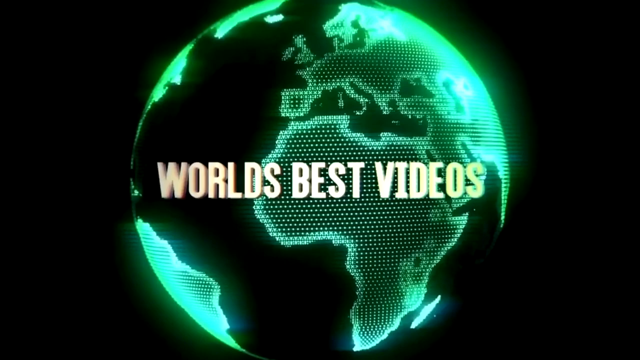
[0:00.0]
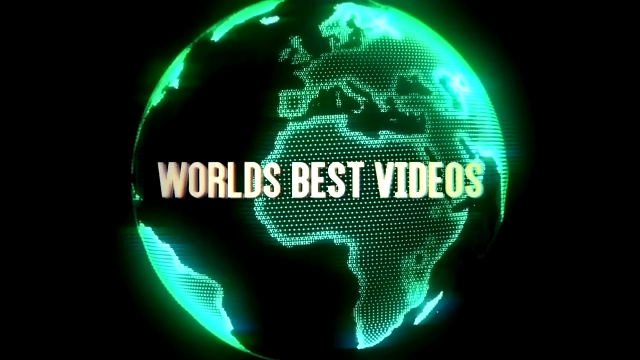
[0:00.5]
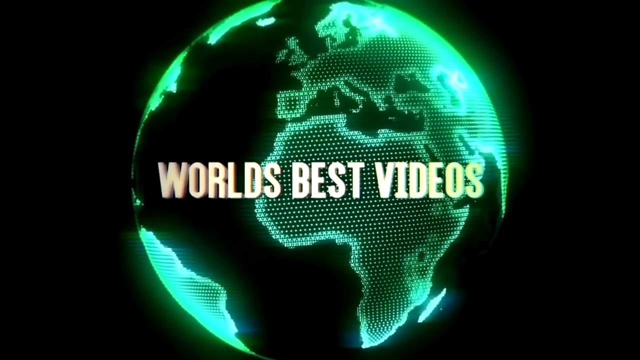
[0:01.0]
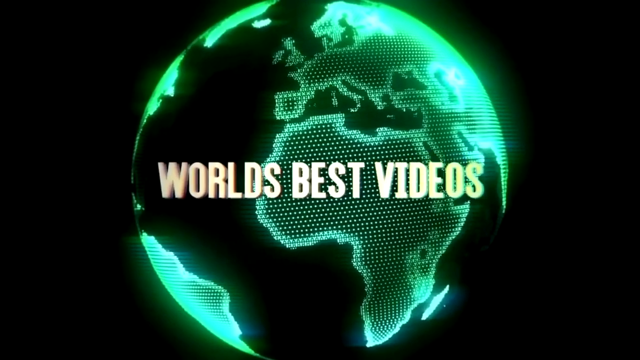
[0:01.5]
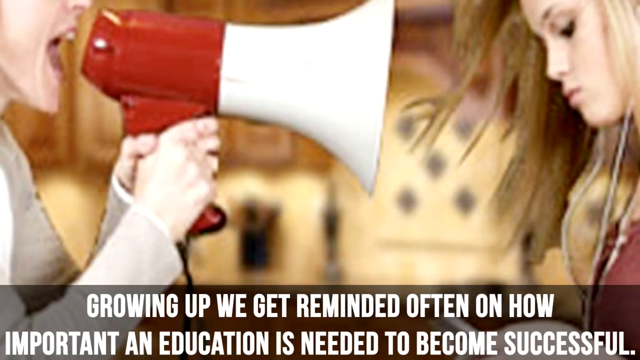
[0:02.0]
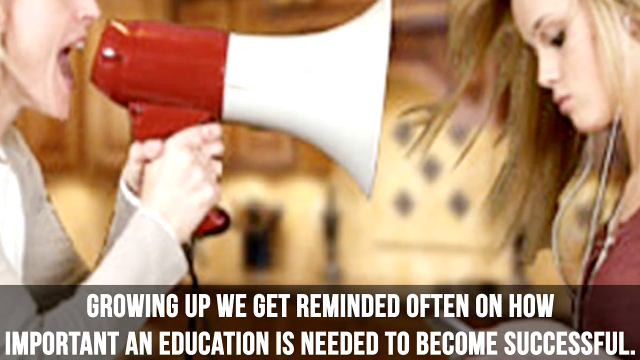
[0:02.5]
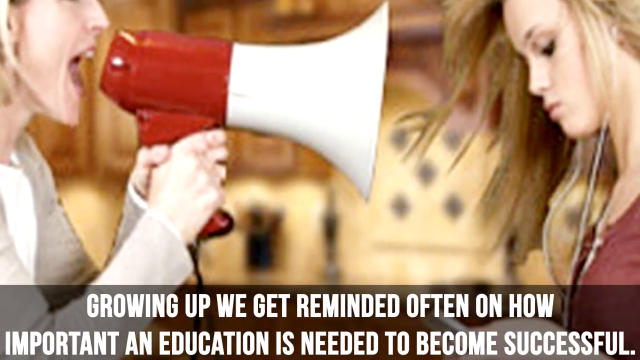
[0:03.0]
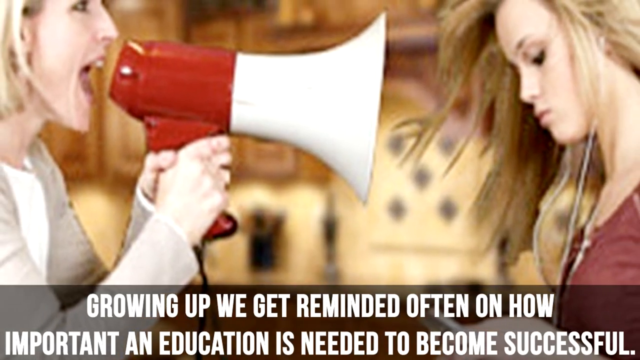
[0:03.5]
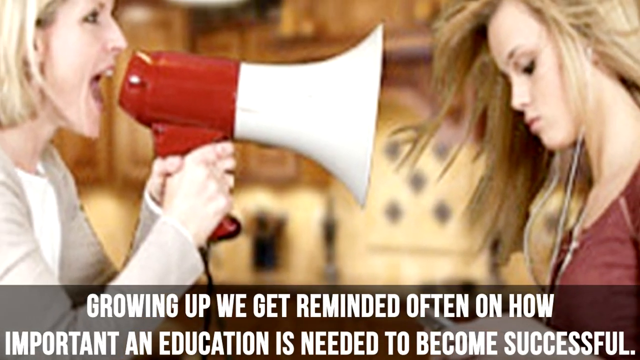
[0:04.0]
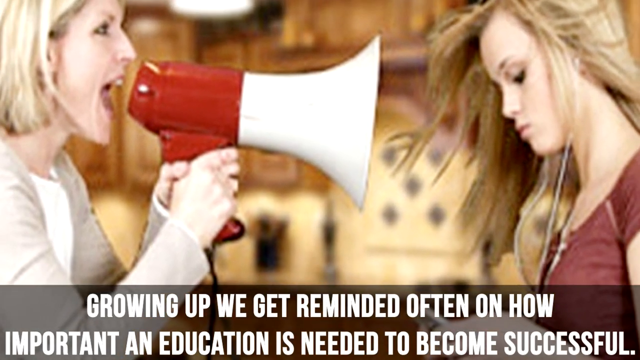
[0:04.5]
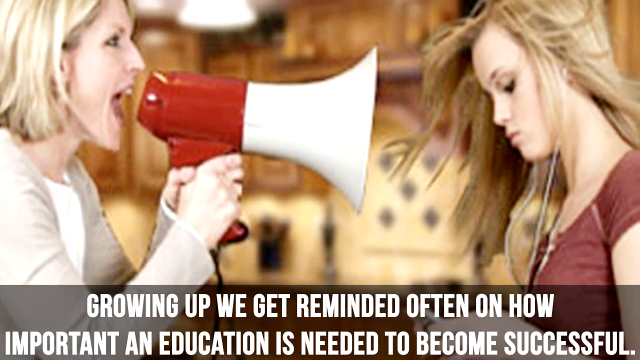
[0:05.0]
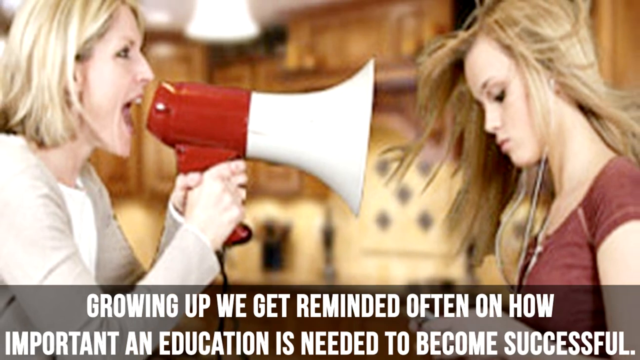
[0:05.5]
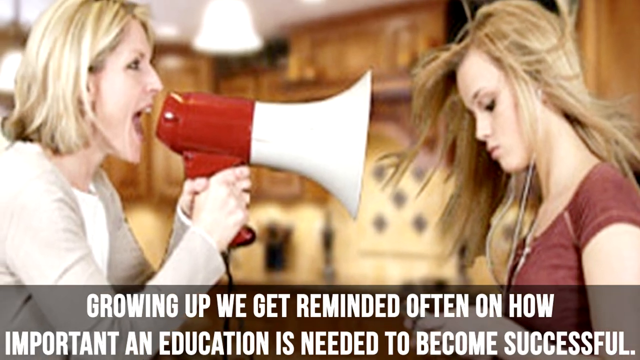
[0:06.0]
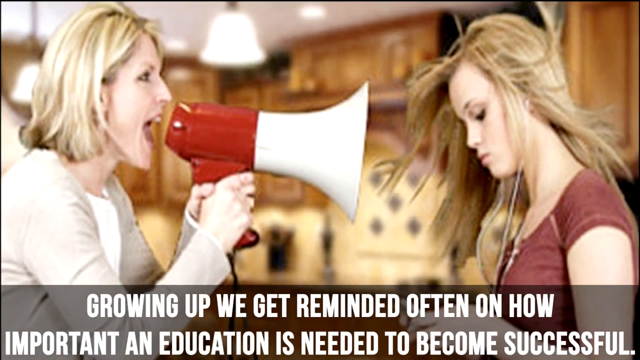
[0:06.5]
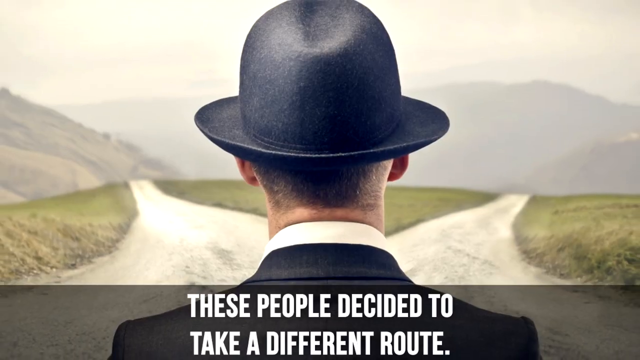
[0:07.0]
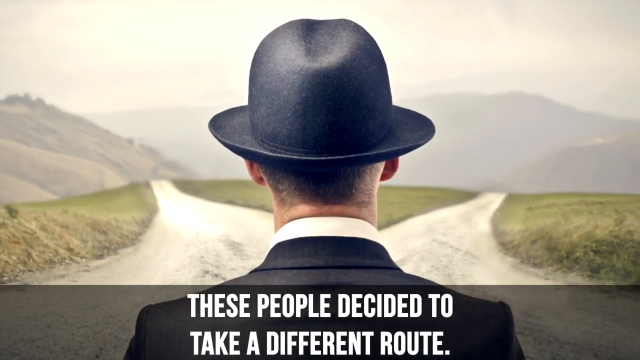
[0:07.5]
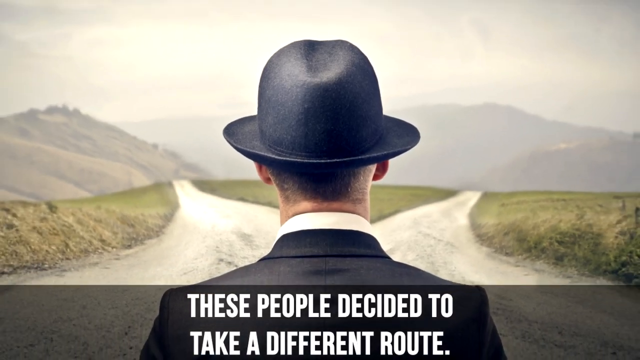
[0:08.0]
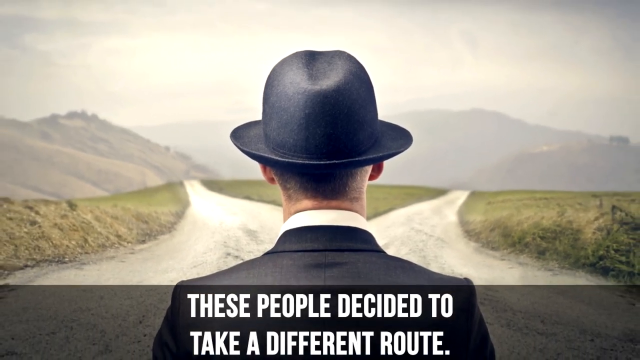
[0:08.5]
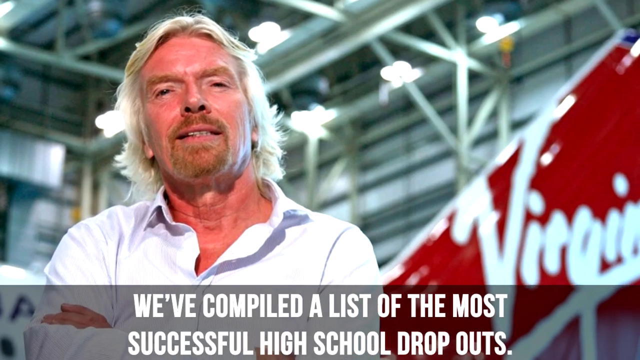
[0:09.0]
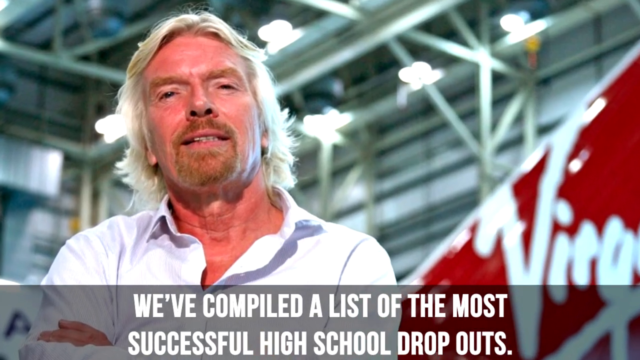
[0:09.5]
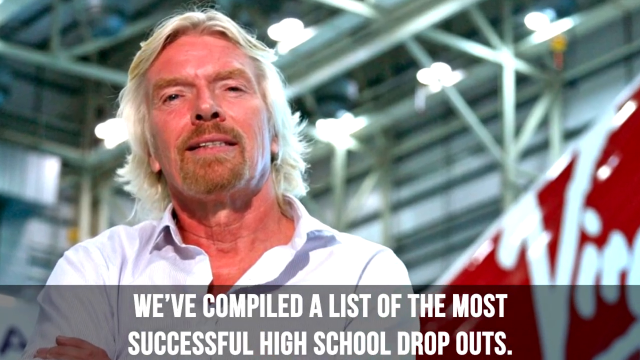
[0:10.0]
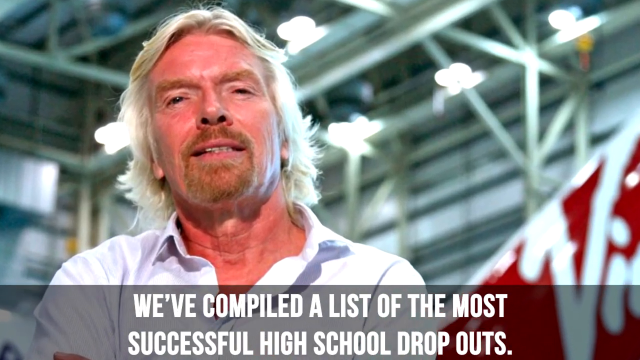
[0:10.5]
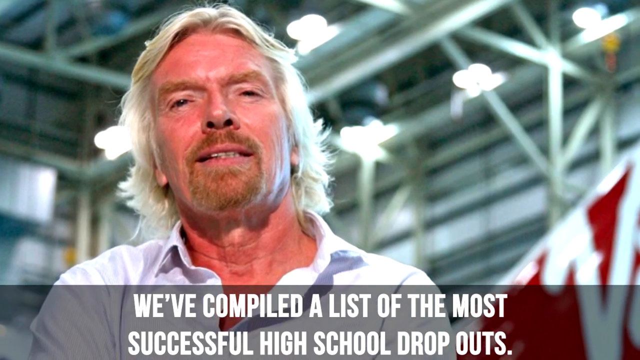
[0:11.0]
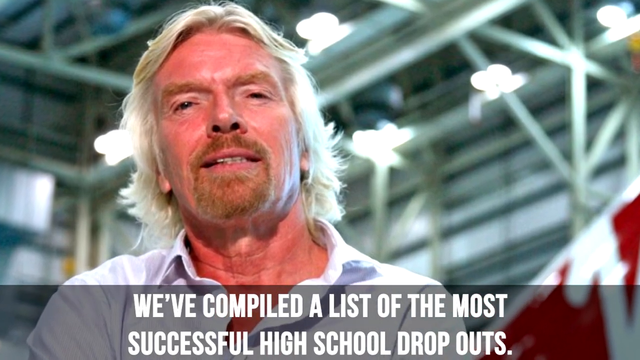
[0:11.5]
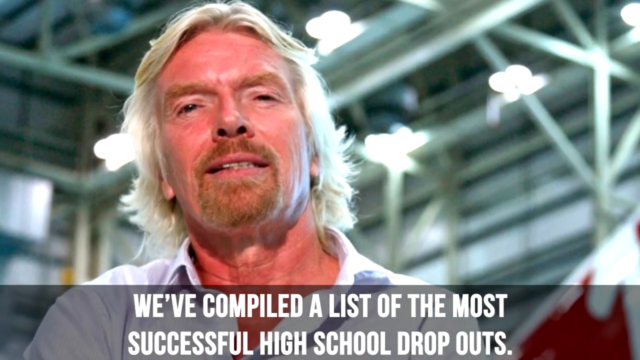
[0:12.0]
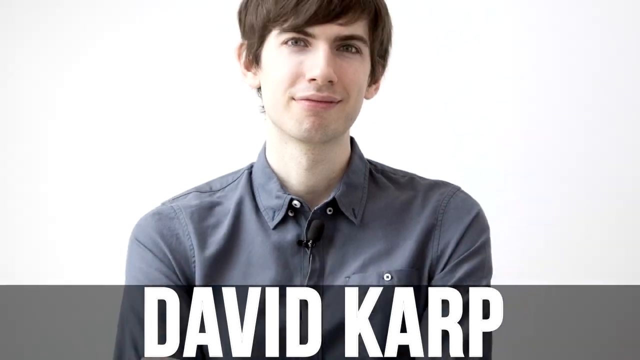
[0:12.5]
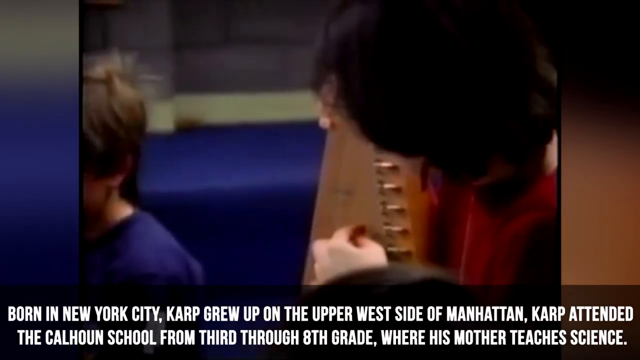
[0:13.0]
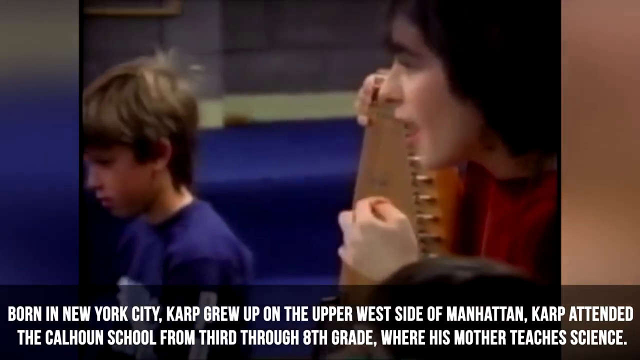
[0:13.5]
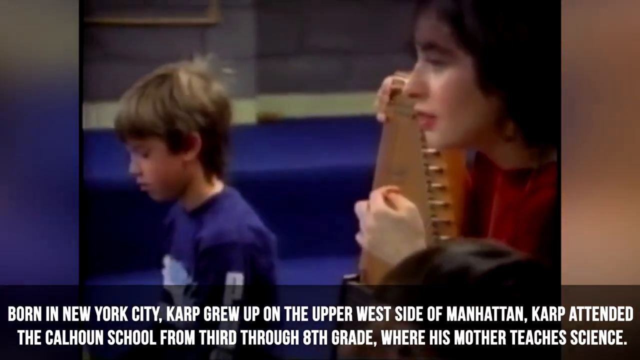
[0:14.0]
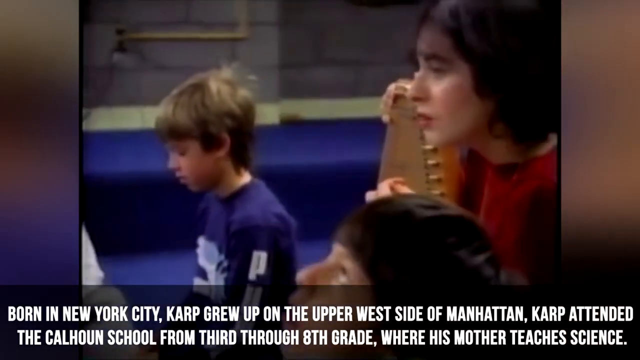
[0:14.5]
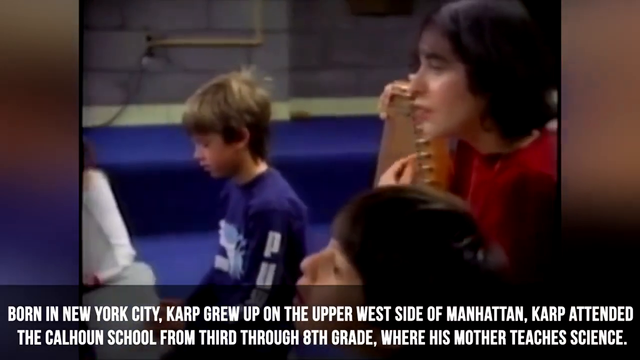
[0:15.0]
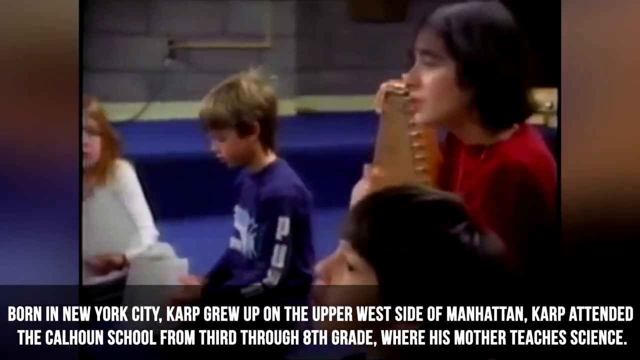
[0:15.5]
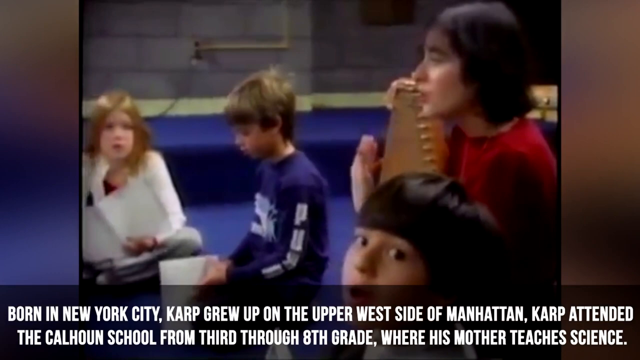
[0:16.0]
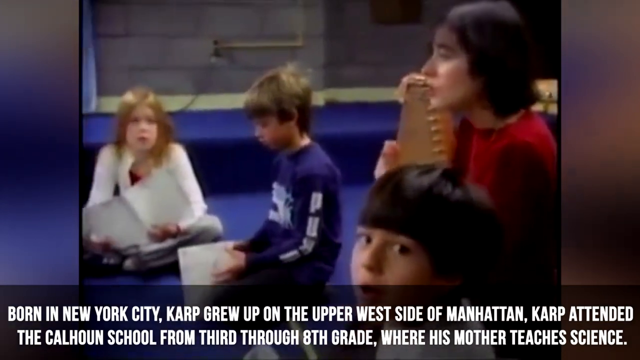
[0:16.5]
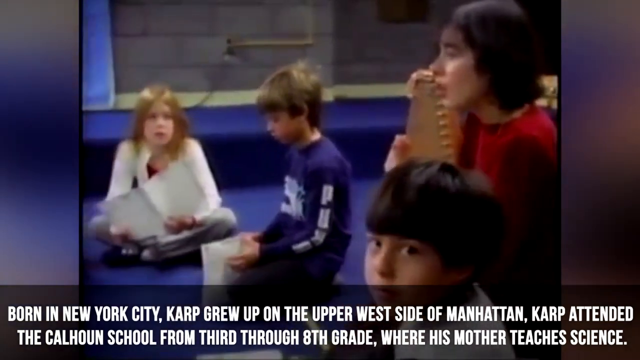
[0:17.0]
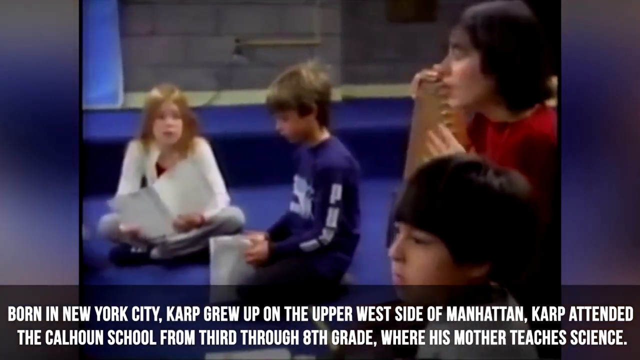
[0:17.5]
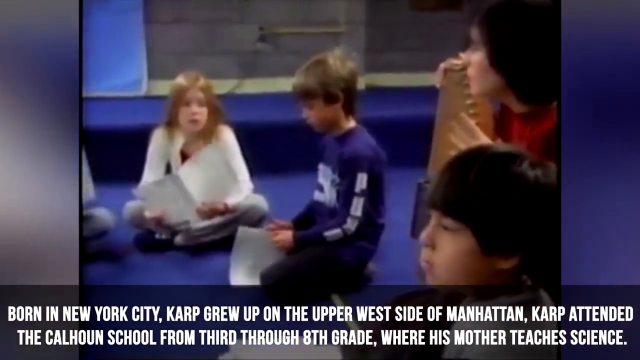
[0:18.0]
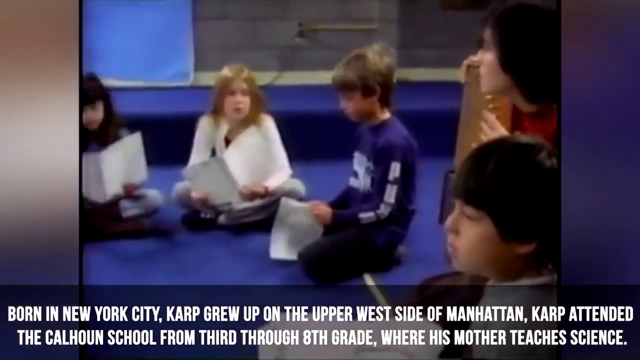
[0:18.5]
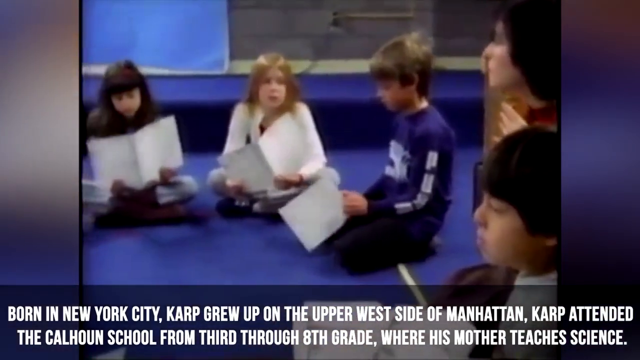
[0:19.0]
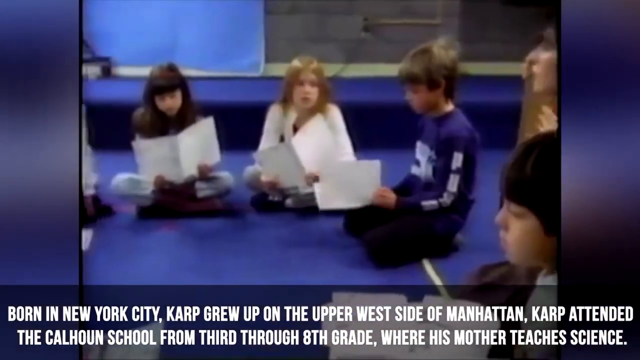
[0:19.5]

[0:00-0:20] A greenish digital view of the world, showing Africa, Europe, part of South America and a little of North America on the left side, is set against a black background on the left, right and behind it. Green uppercase text reads "world's best videos." The video then cuts to a woman on the left holding a red and white microphone and screaming at another woman; both women are white. Text runs at the bottom of the screen throughout these shots, beginning "growing up we get reminded often." Next, a man goes down a split path, followed by a picture of Richard Branson, with bottom text reading "we've compiled a list of the most." The video then apparently cuts to a classroom setting in old 4:3 footage, with text mentioning New York City and the Upper West Side of Manhattan.